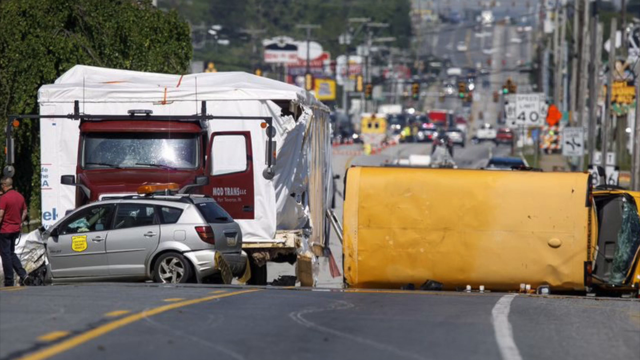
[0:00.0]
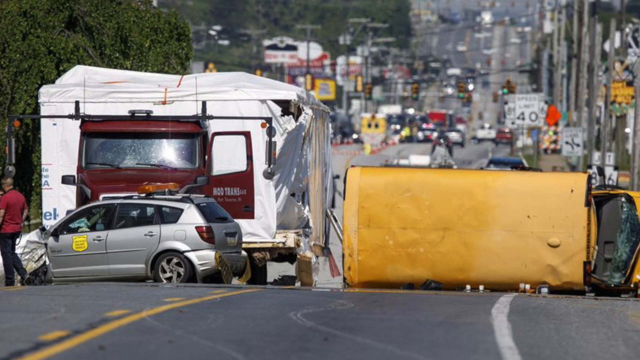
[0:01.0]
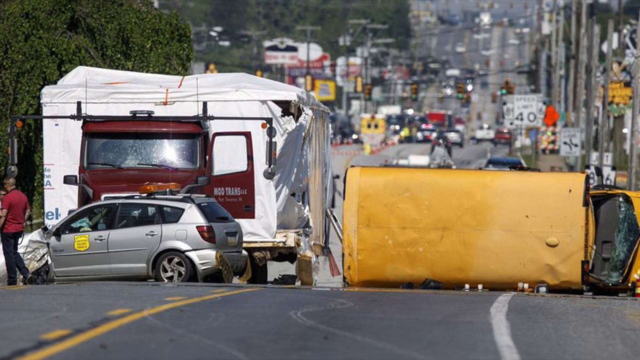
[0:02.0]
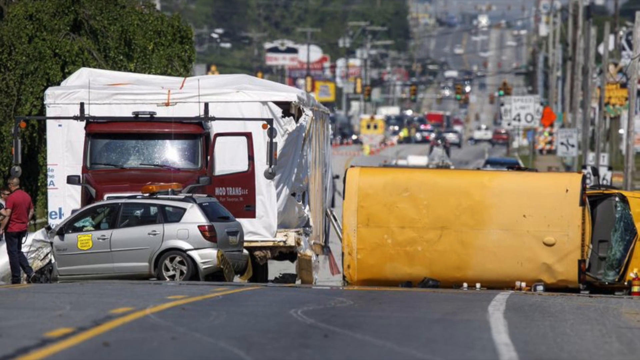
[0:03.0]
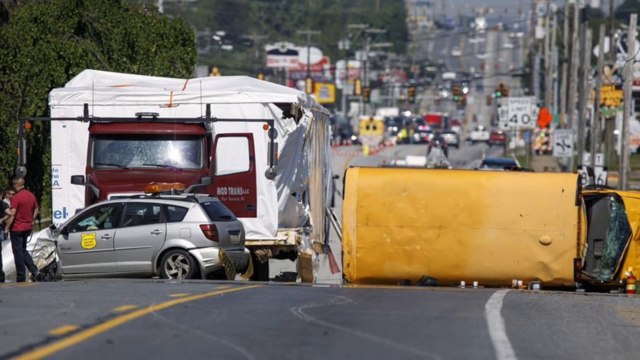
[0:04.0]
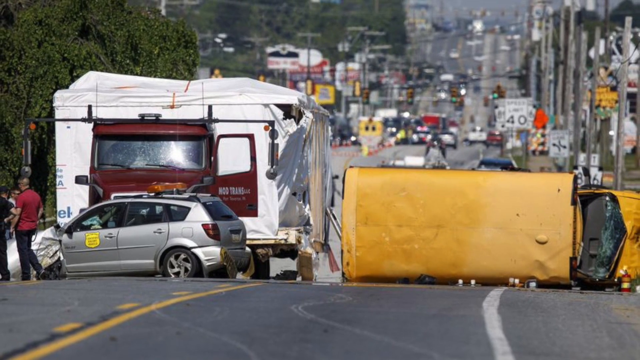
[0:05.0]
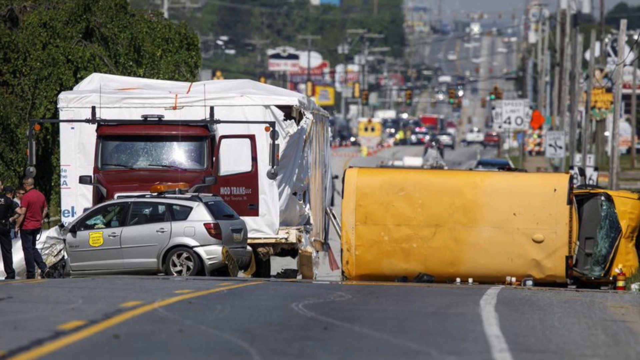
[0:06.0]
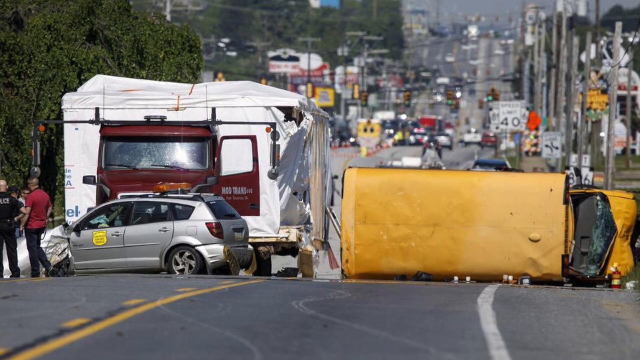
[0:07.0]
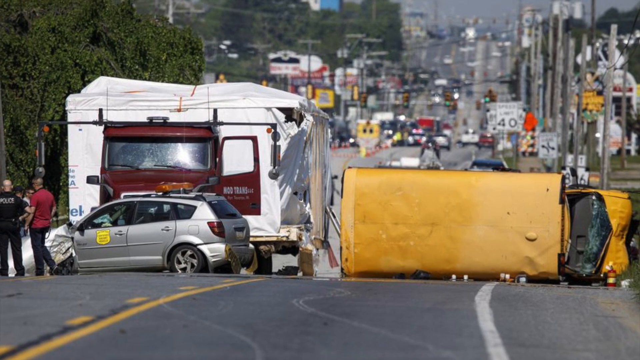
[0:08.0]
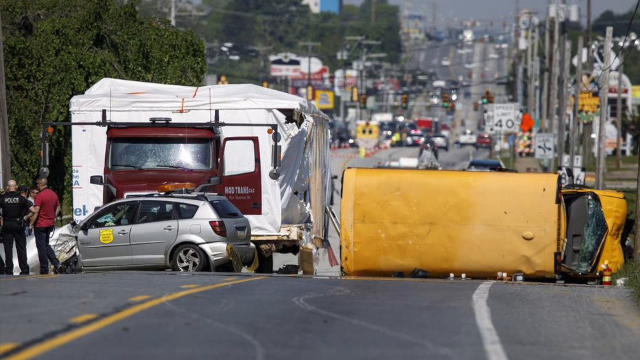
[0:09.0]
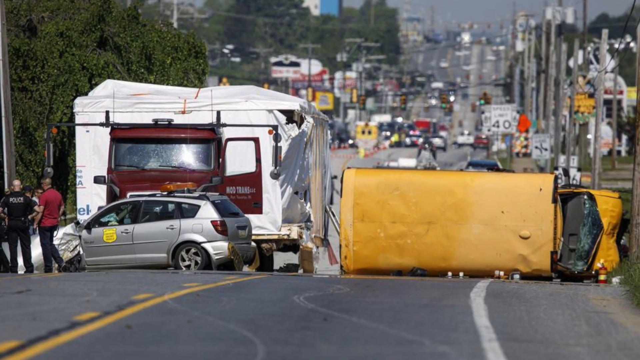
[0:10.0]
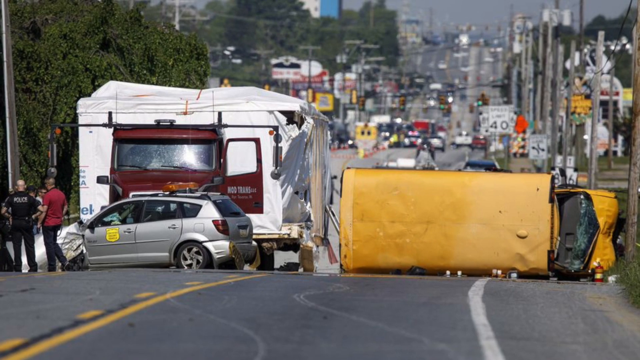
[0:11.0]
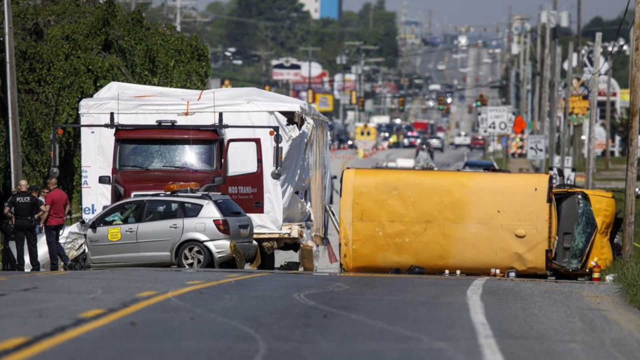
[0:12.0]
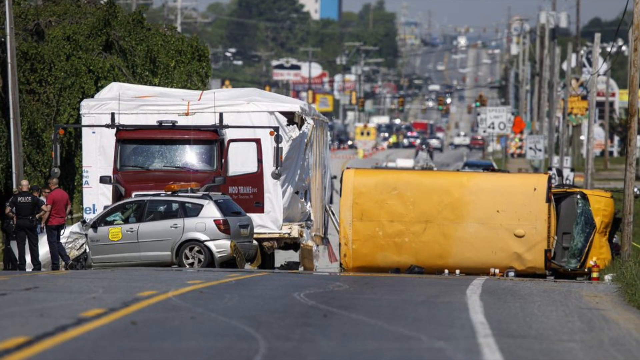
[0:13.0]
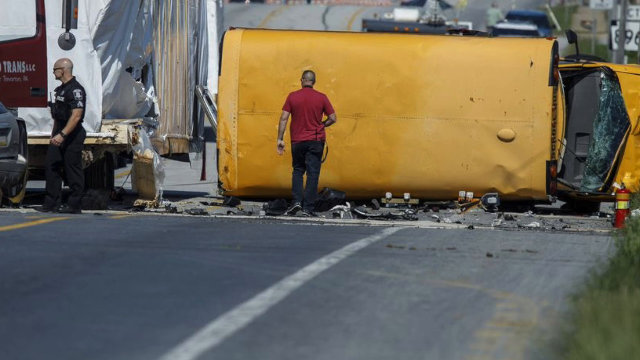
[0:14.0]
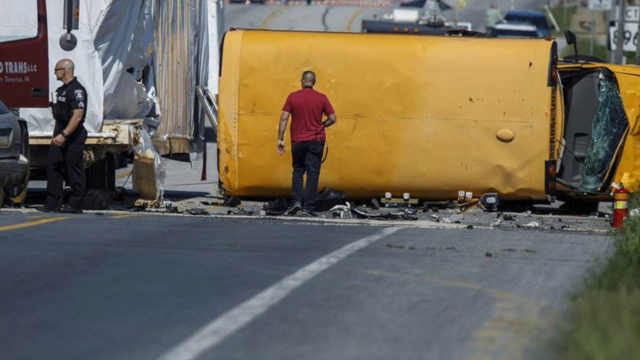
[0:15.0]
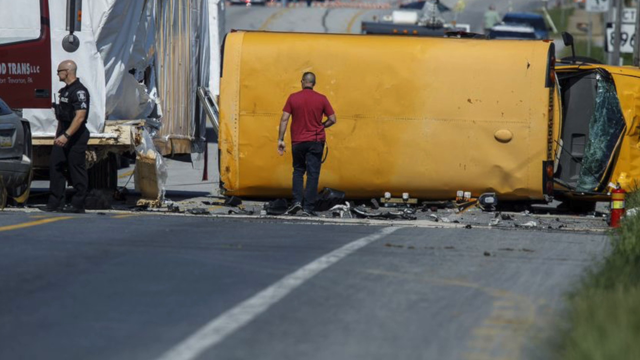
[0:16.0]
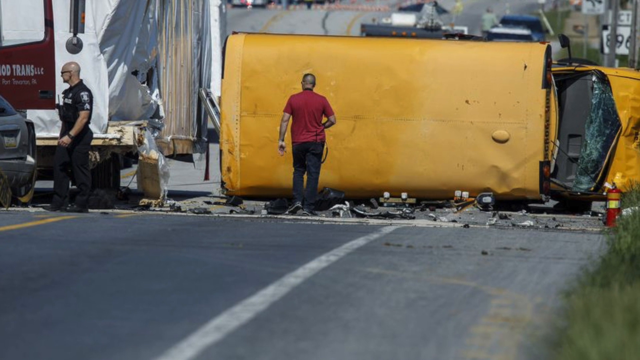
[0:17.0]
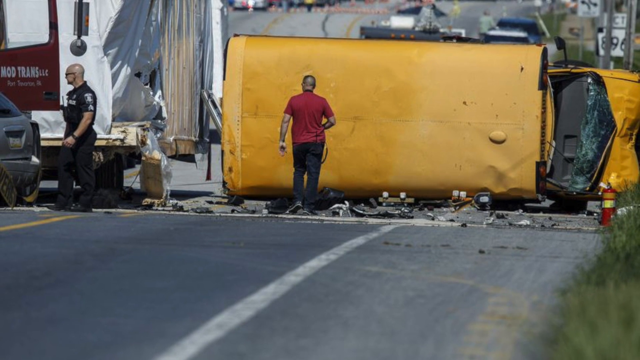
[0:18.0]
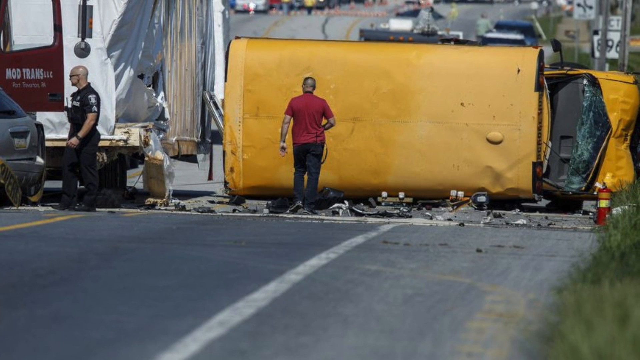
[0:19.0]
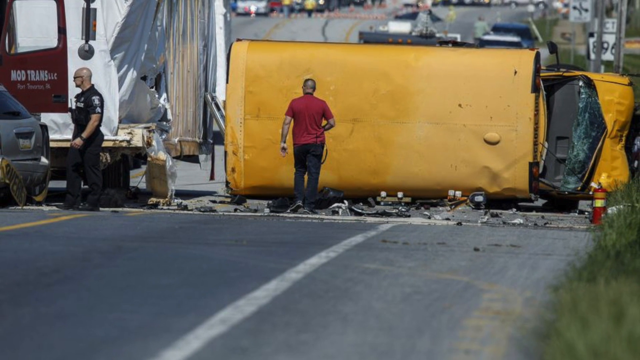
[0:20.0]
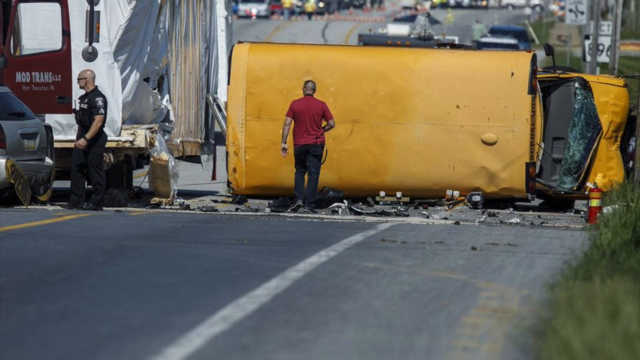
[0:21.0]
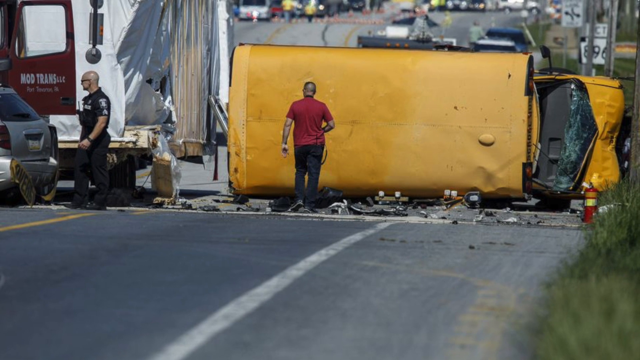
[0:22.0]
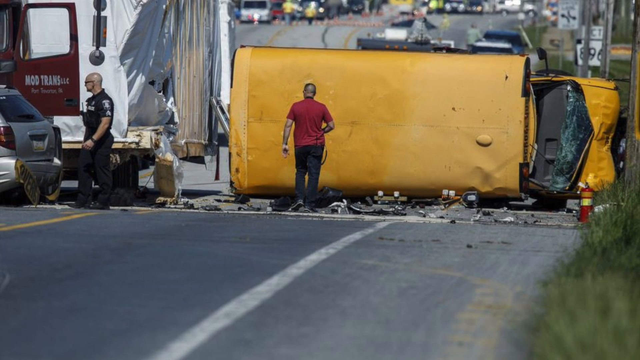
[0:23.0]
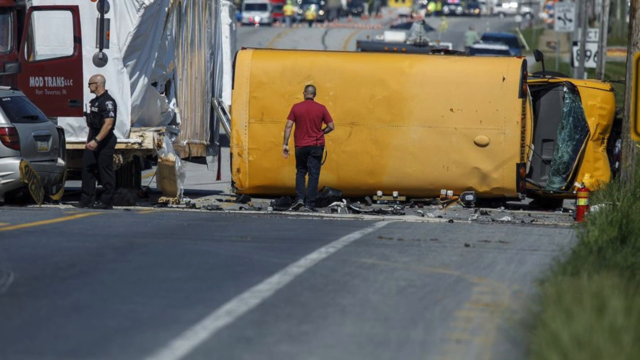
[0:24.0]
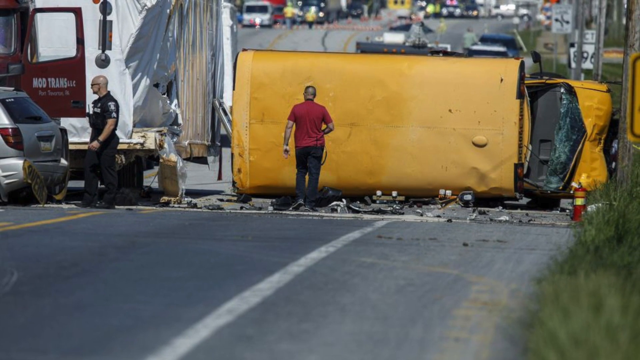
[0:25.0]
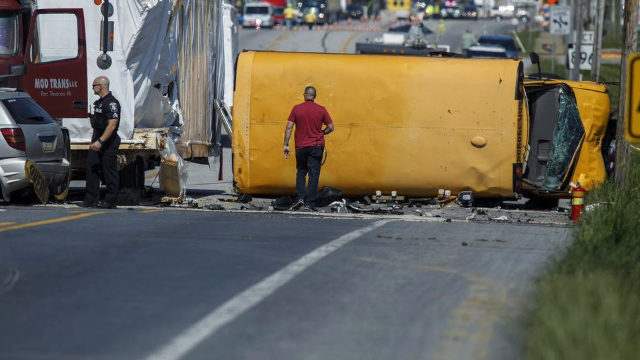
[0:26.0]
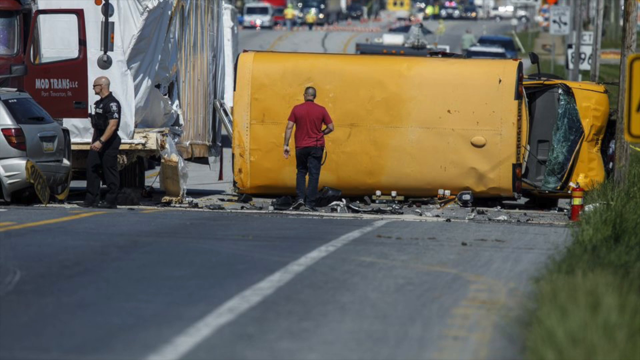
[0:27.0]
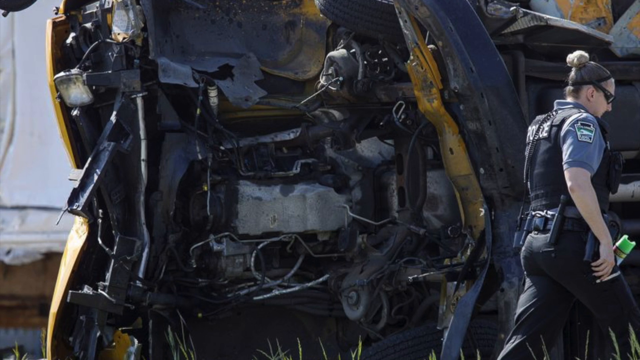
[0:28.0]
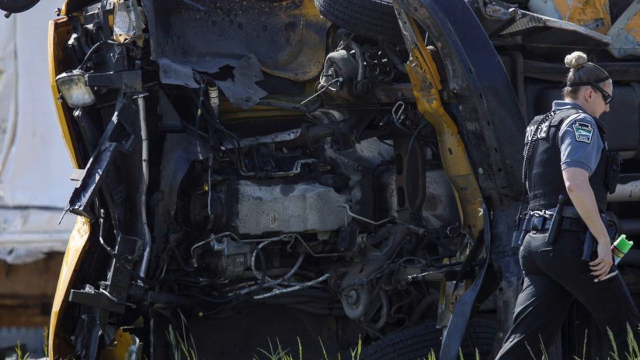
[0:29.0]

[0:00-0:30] A picture shows a really bad car accident. The background is a little blurry, but what looks like a school bus is lying on its side. A silver mini SUV with some kind of symbol on its side points in the wrong direction, its front end crushed. Another vehicle involved in the wreck looks more like a big construction garbage can vehicle or something similar. The view pans to the roof of what is apparently the school bus, with a man standing in front of it. The vehicle is on its side, so the roof faces the direction the vehicle would be expected to travel. The man wears a red shirt and black pants, and to his left a policeman is looking at another vehicle.